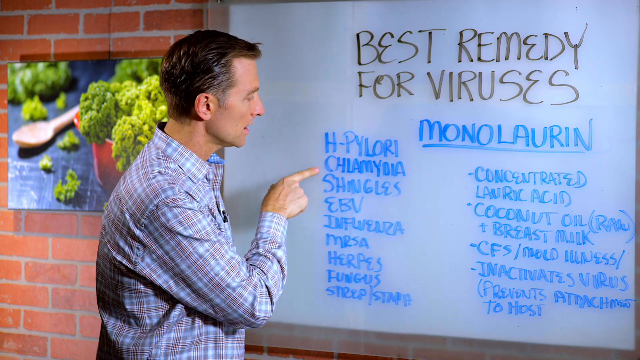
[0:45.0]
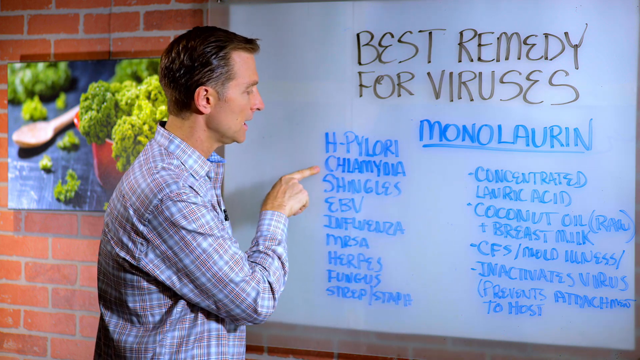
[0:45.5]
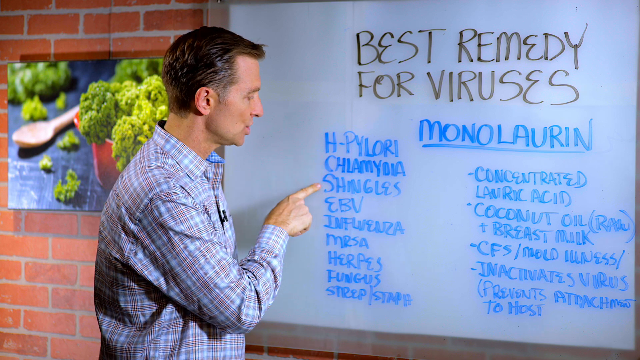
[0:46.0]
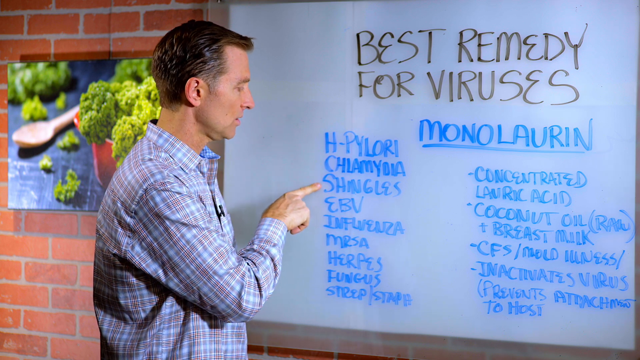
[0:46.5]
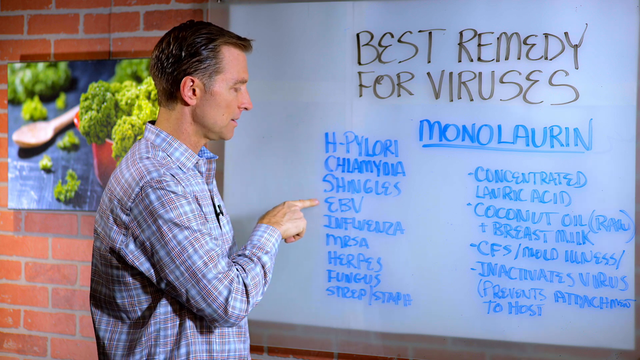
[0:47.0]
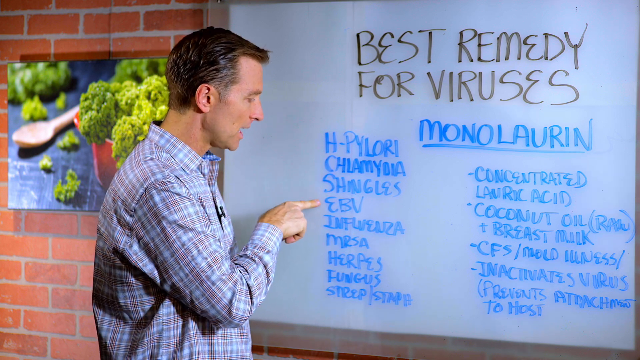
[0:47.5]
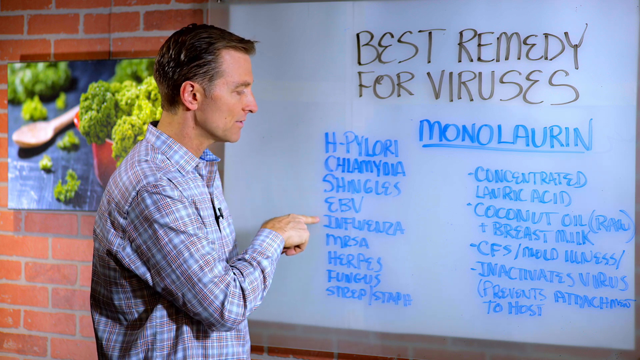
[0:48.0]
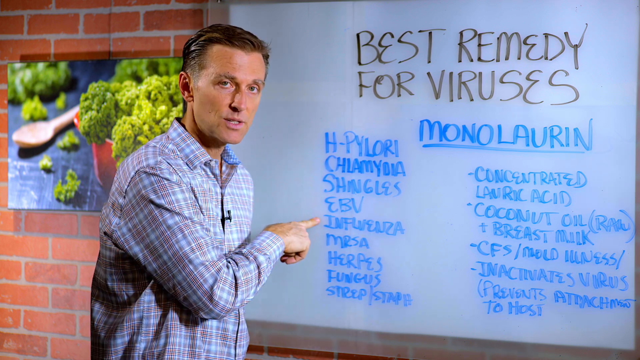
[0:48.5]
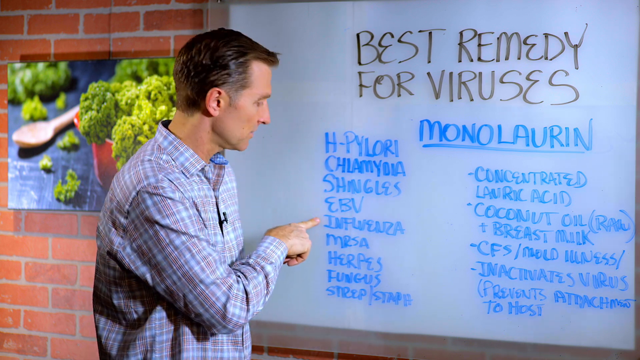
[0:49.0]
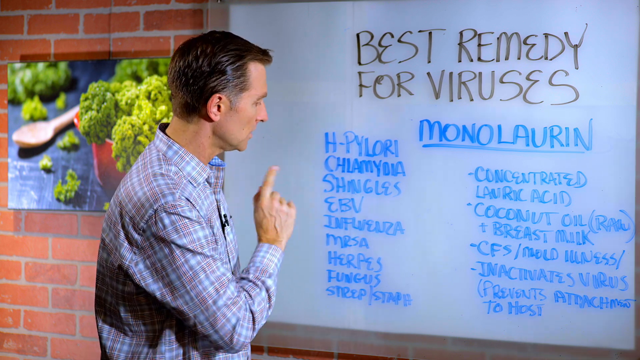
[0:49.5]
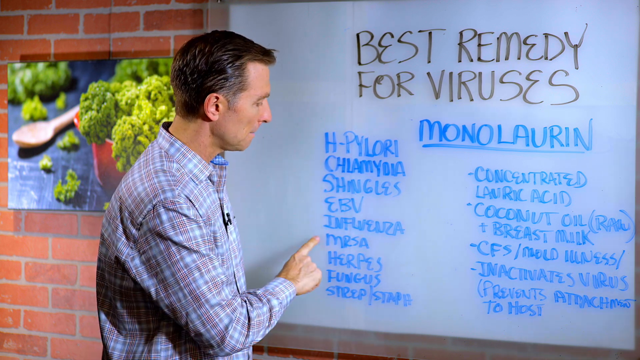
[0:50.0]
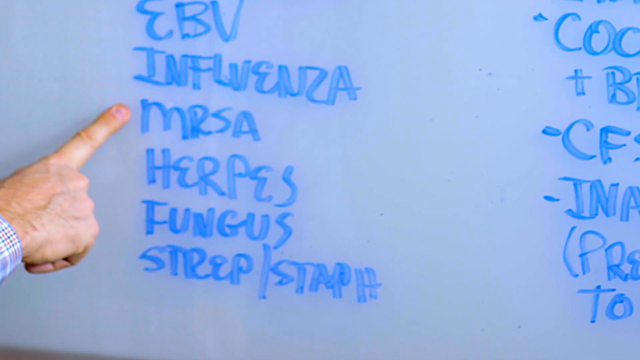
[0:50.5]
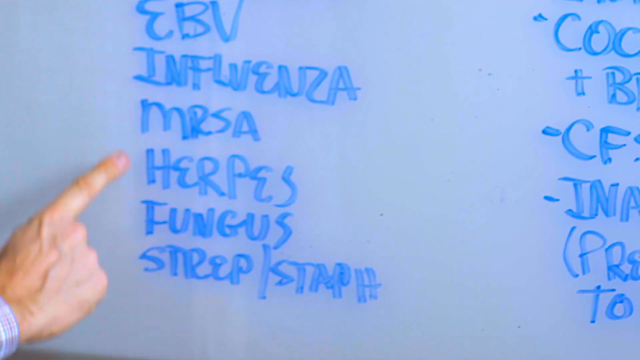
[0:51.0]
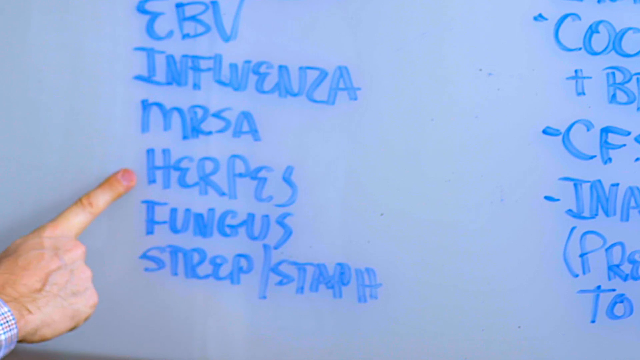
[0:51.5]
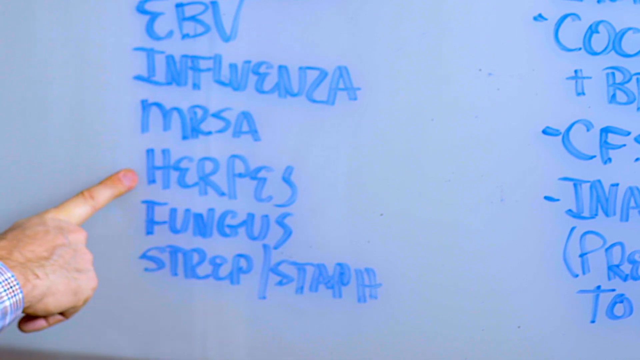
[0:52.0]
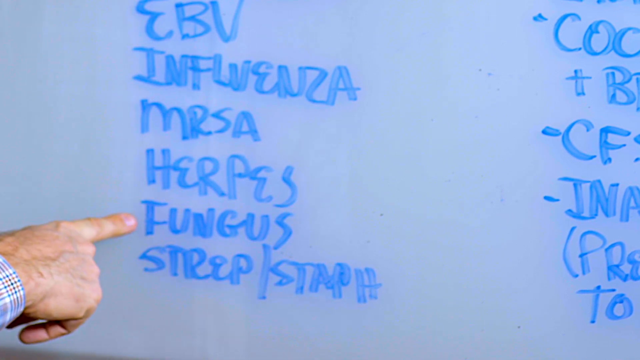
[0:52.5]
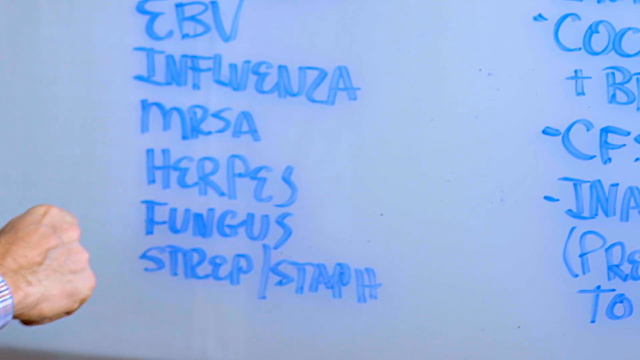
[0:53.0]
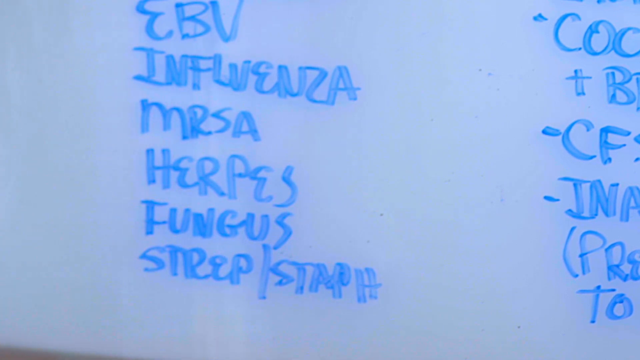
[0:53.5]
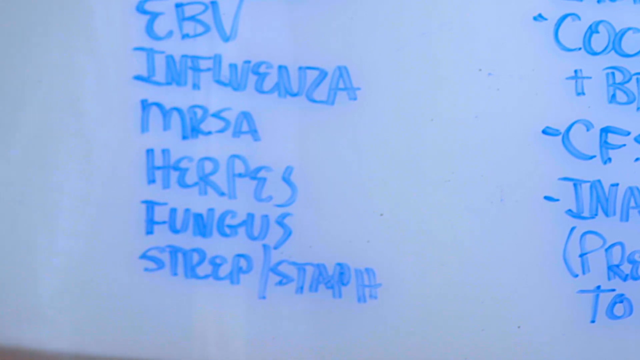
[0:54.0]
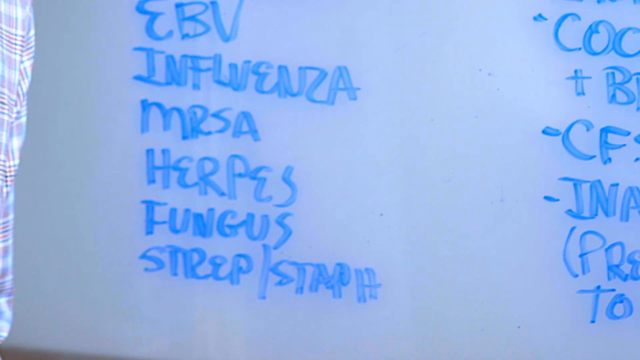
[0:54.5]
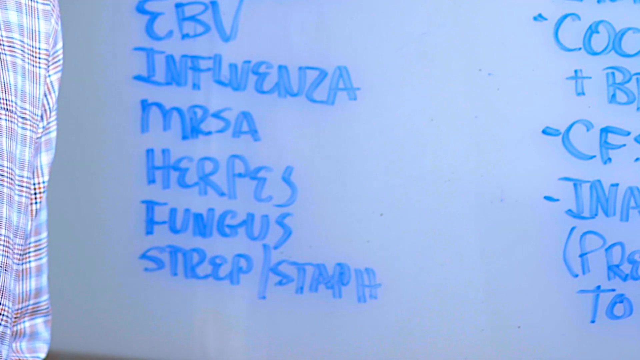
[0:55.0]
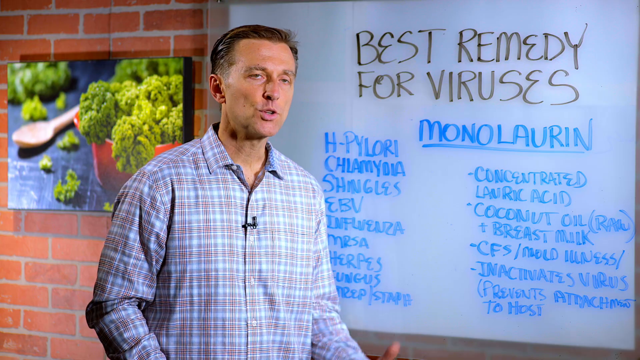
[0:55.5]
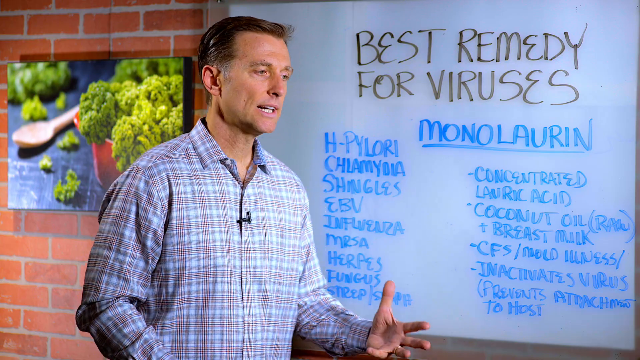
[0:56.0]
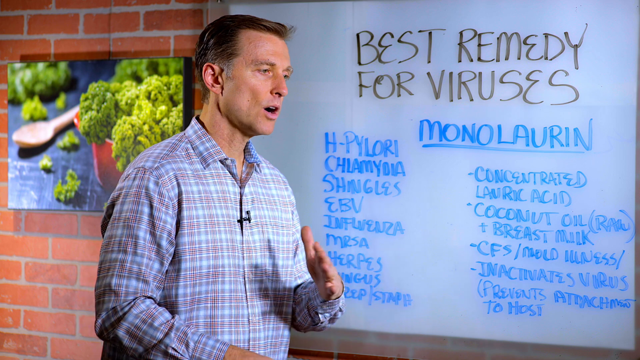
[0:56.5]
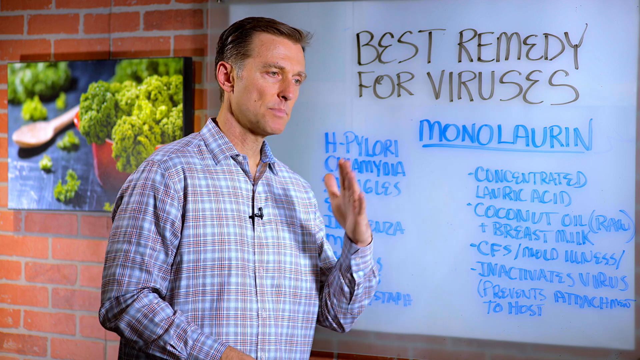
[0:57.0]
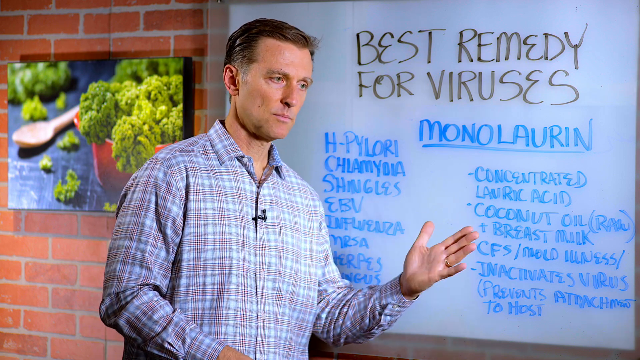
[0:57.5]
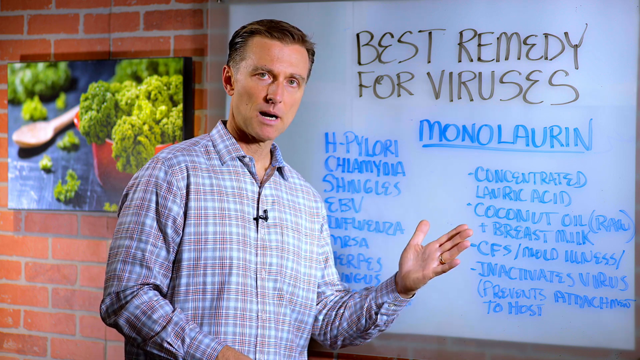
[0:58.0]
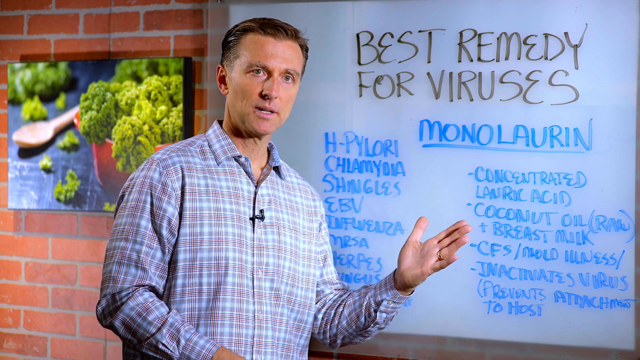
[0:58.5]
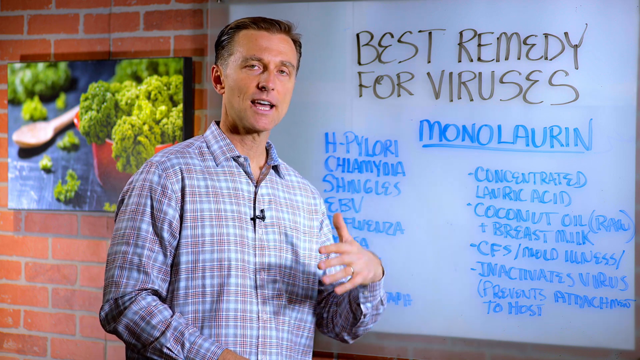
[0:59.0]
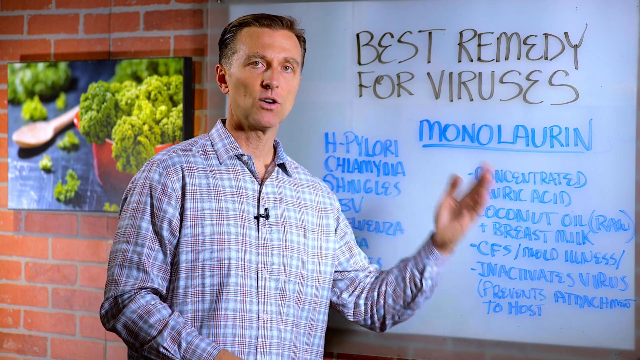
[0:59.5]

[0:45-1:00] The man lectures in front of a camera about the best remedies for viruses, pointing several times with his right pointer finger. Behind him is a screen with a list written in blue of different viruses on the left and, on the right, a list of what monolaurin, a supplement, helps remedy. He also stands in front of a brick wall, with a large picture to his left showing a red bowl filled with broccoli and a wooden spoon. He wears a microphone.